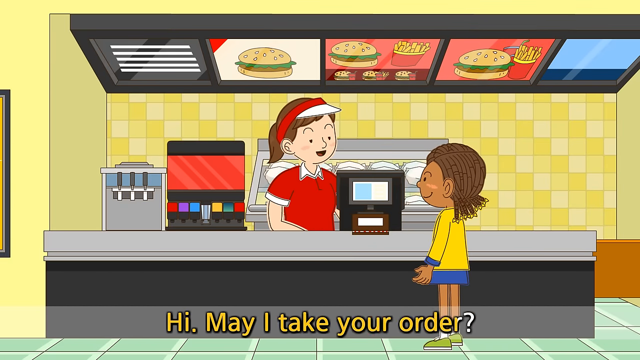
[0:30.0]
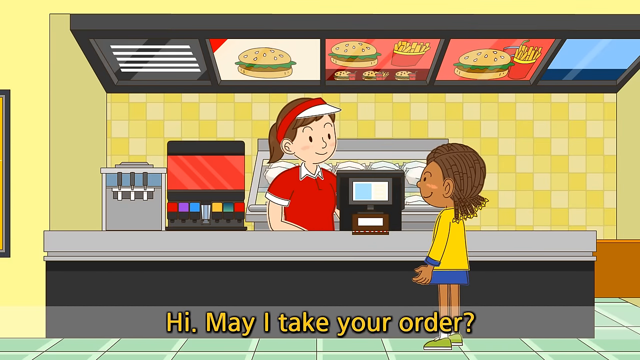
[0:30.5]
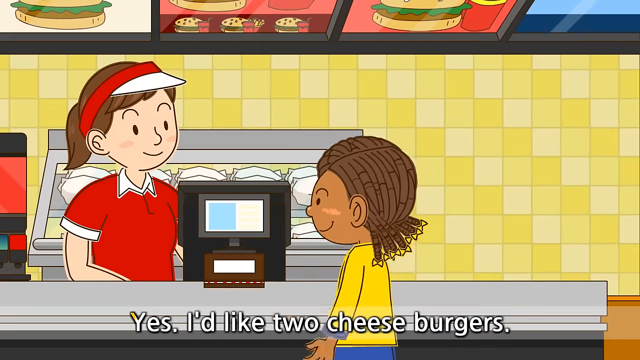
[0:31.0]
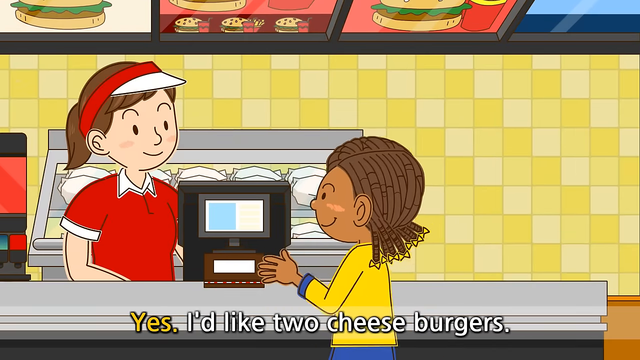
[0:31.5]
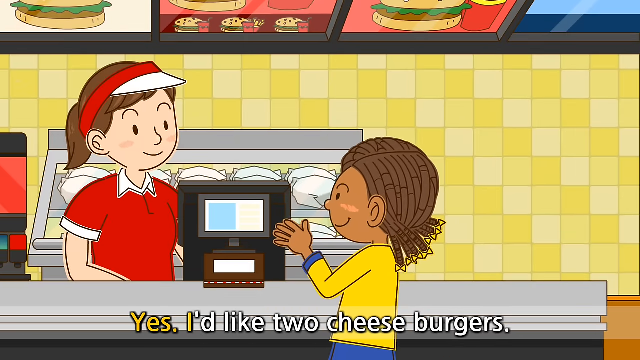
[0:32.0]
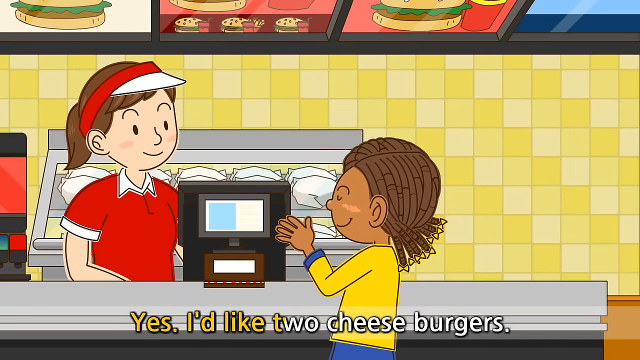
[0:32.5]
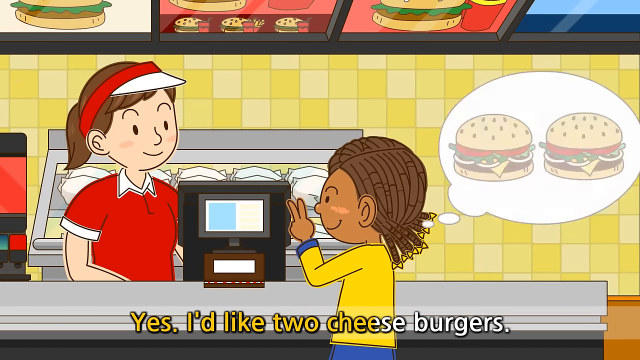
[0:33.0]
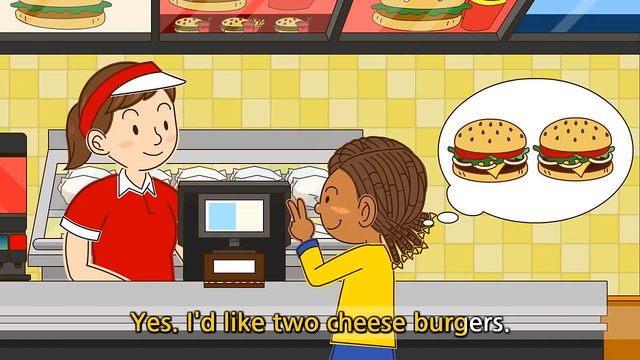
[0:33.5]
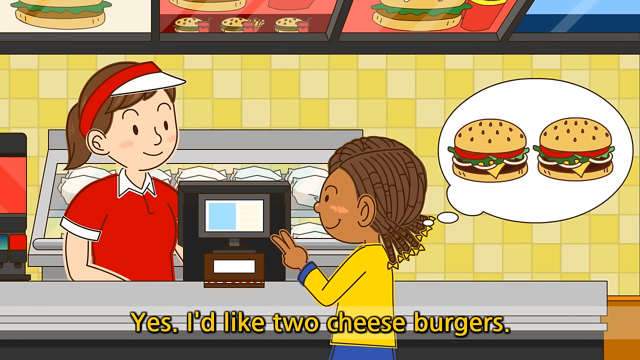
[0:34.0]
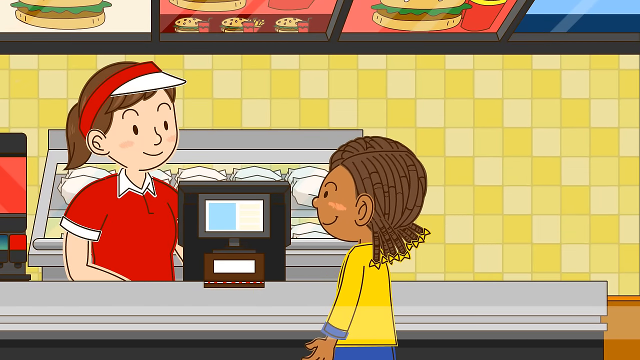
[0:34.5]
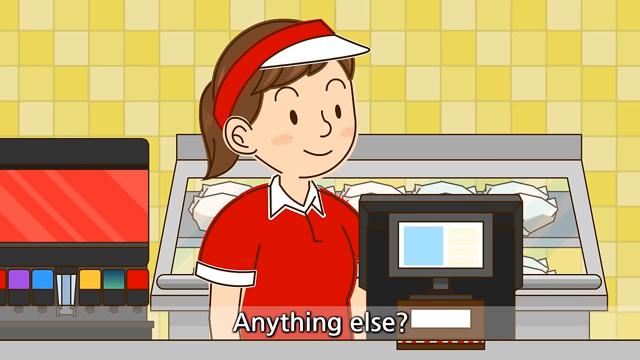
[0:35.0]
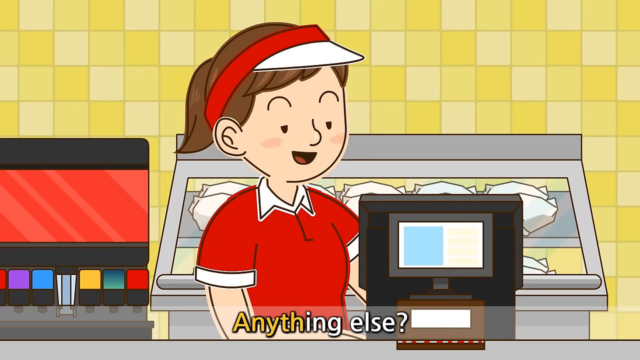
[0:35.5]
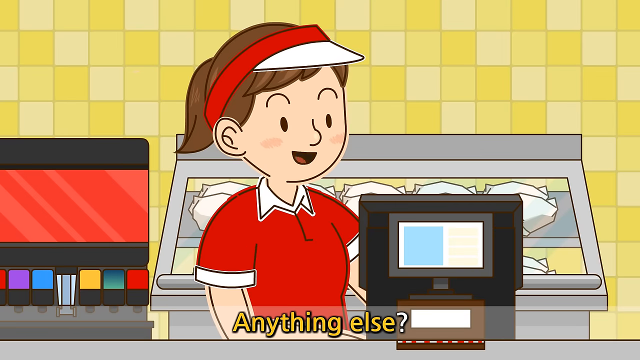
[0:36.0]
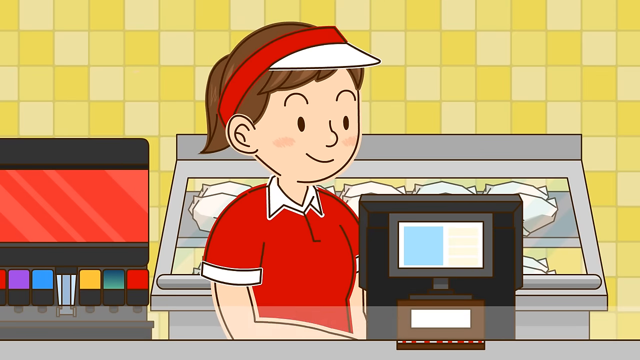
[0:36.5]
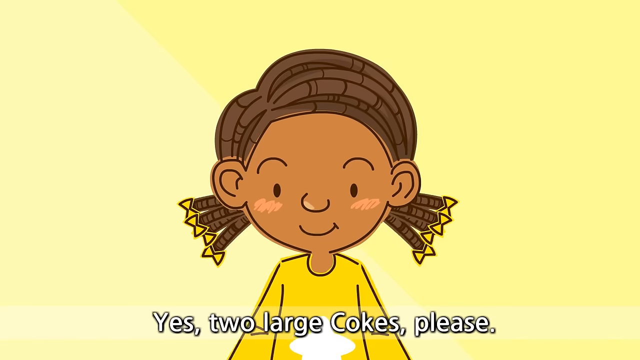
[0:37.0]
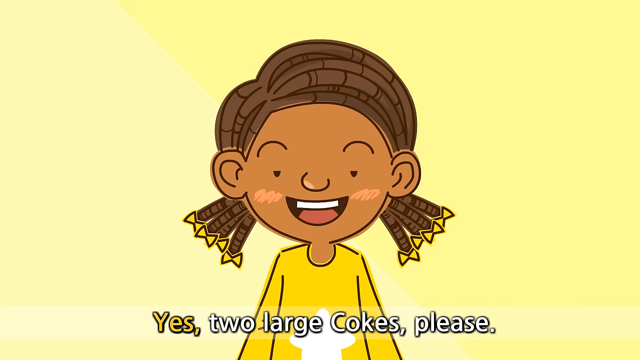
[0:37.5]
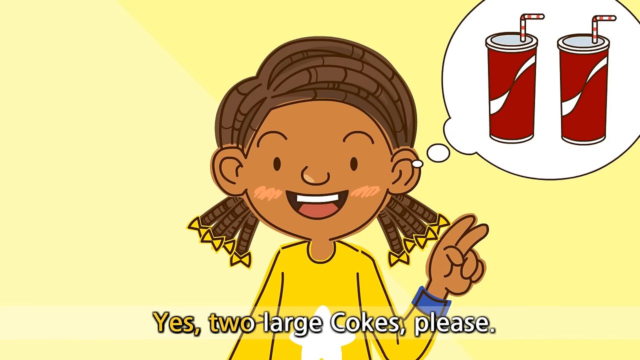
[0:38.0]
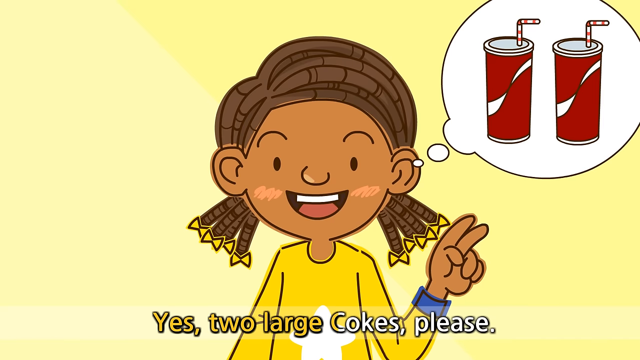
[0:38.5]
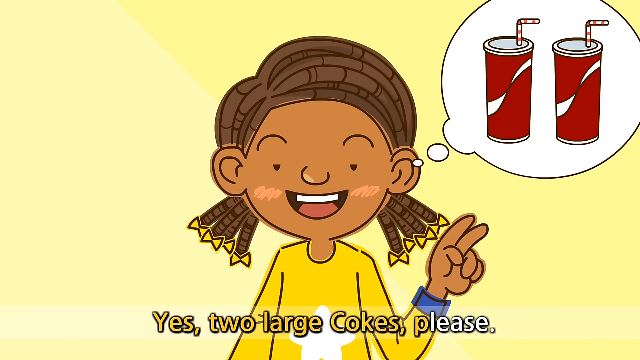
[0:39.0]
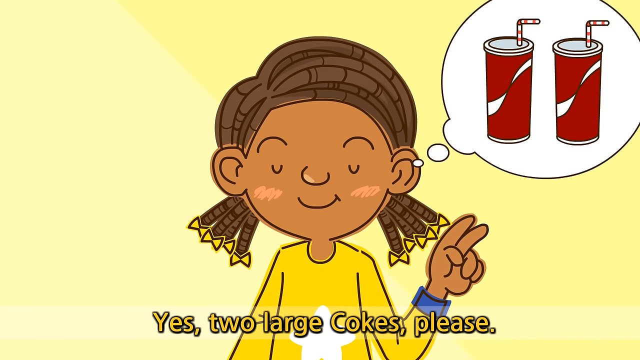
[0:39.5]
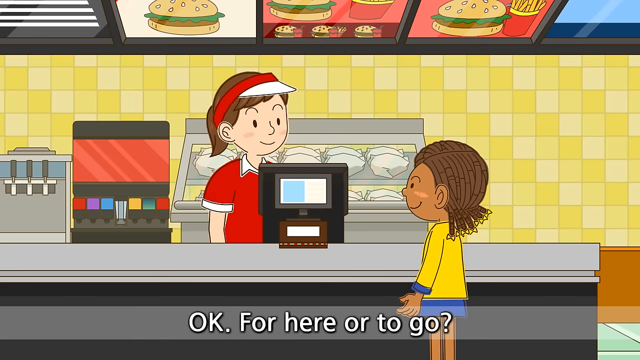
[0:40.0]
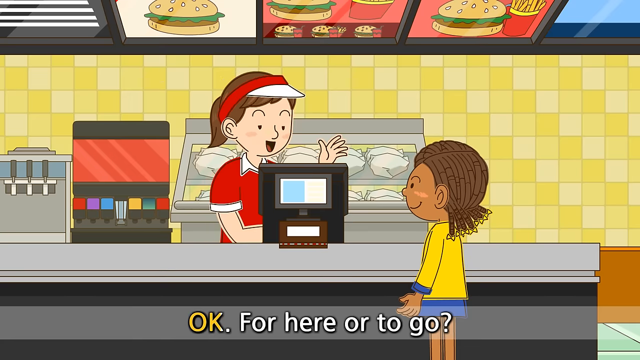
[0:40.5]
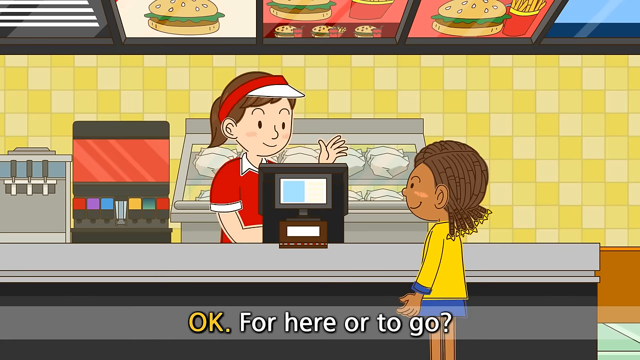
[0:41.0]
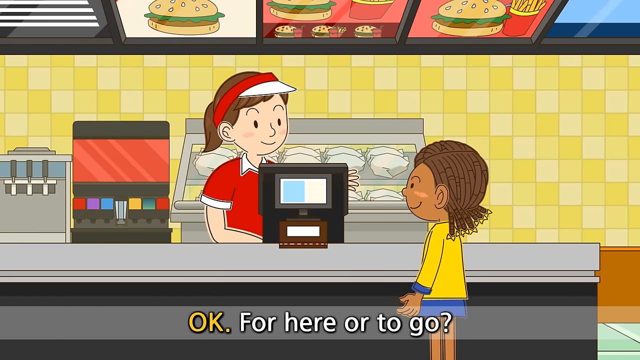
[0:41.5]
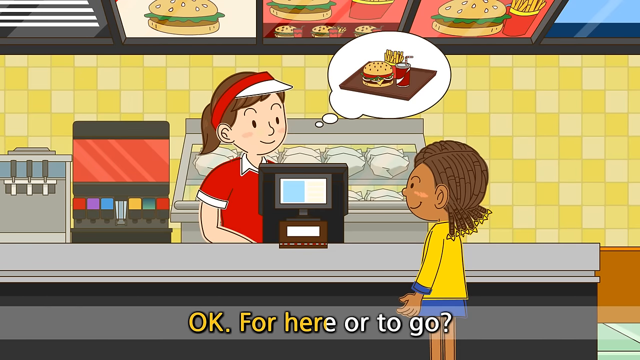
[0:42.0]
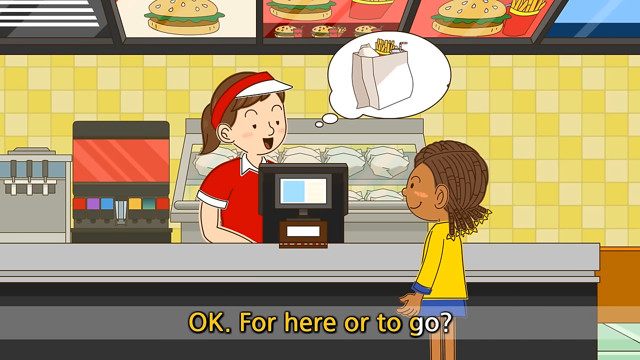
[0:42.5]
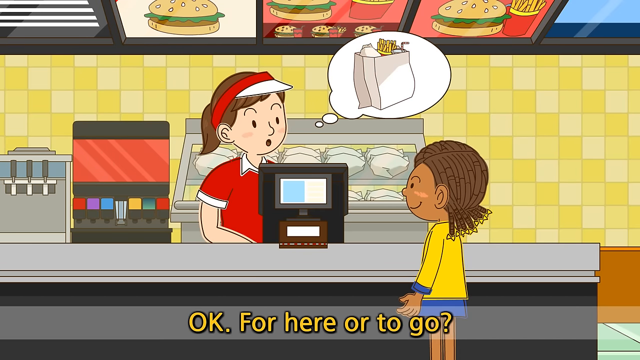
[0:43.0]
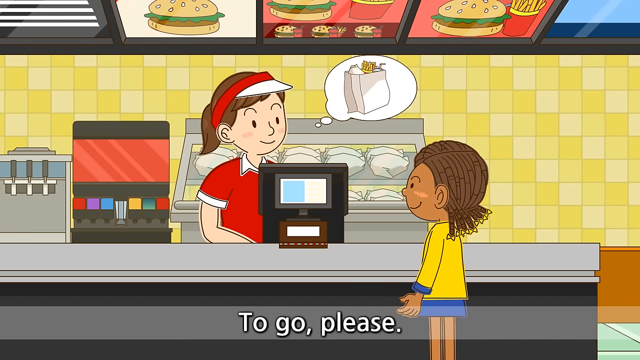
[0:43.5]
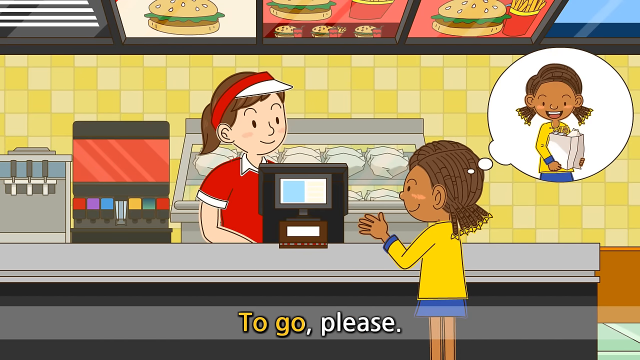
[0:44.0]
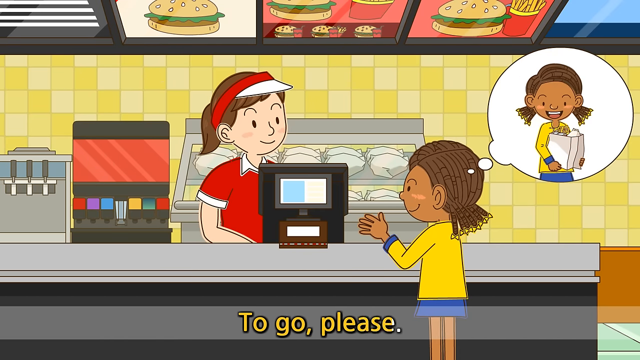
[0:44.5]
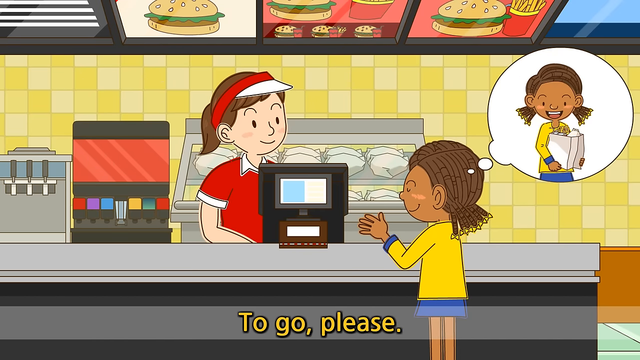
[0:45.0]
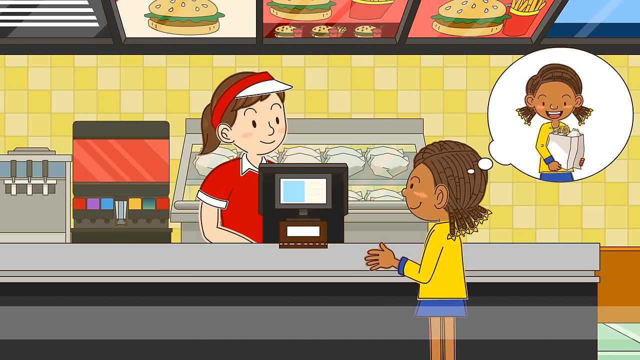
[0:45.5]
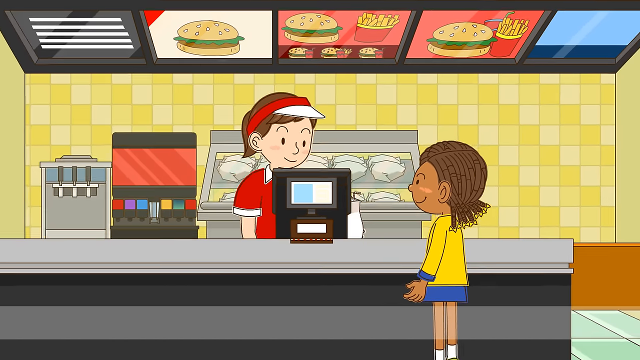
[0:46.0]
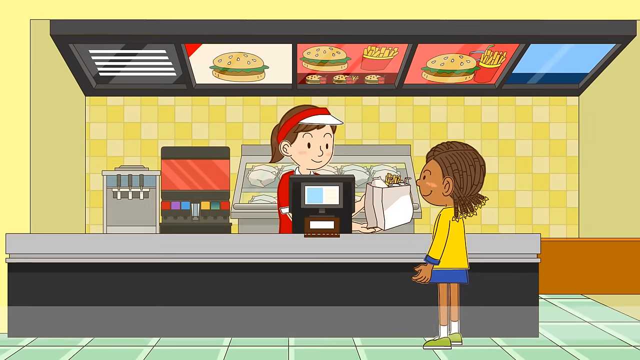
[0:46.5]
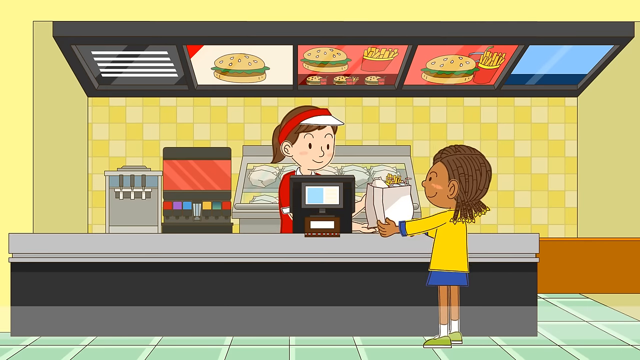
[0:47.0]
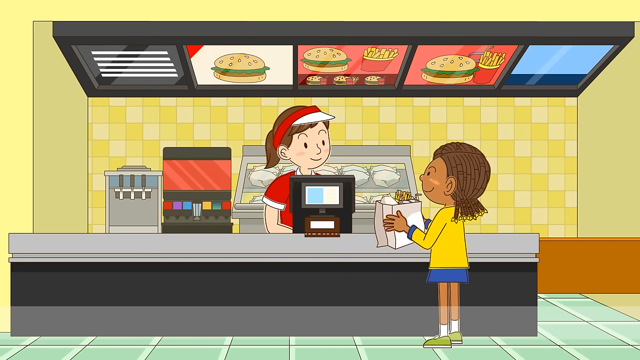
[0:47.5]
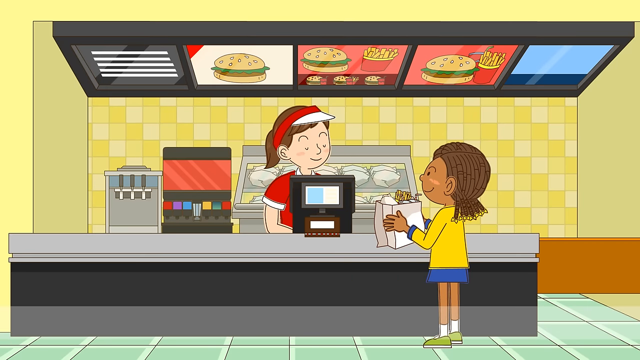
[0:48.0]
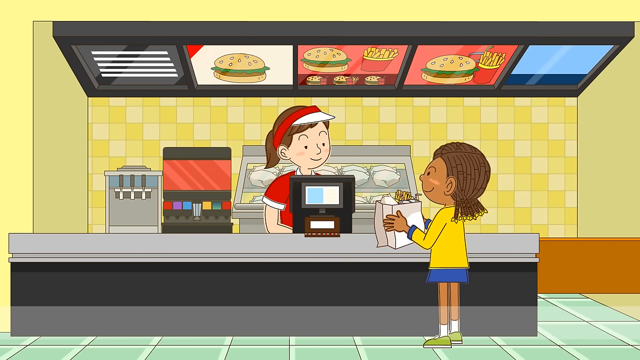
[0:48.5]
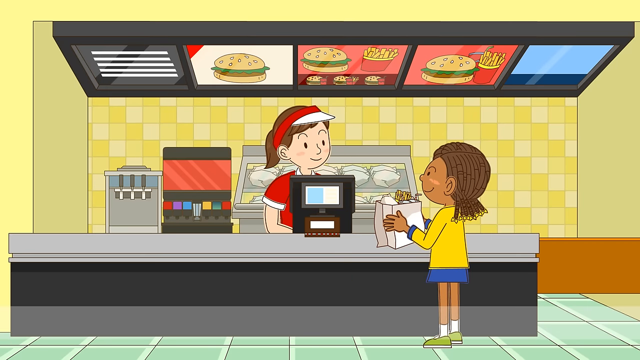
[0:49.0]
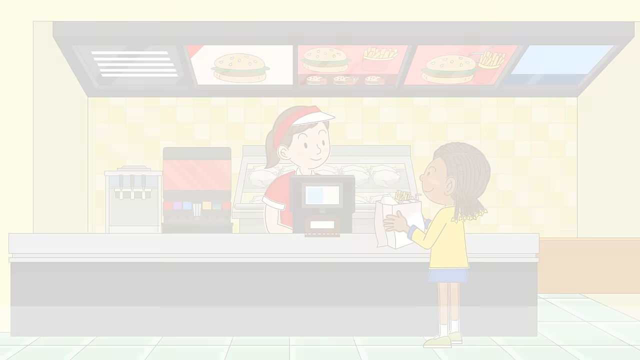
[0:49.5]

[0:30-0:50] A young girl working behind the counter asks a little girl what she would like. The little girl wants two cheeseburgers and two large Cokes and says please; asked whether it is for here or to go, she says, "To go, please." The worker then hands her a bag with her food. The little girl ordering is African-American, with curly hair pulled back and some braids tied back at the back. The worker stands in front of the pop refill area, which has a banner at the top with no words, colored red, purple, teal, yellow, green and red. There is also an area where food that is ready to go is stored, and signs above show pictures of what can be ordered, with no prices visible.